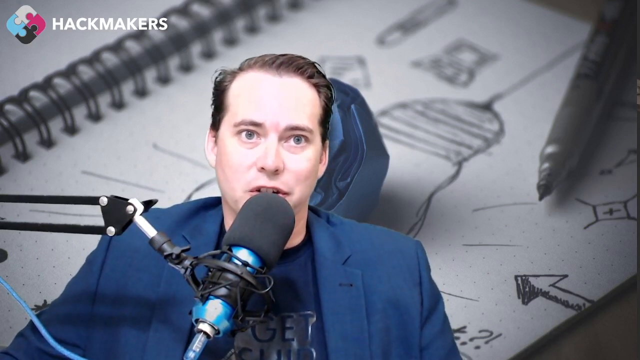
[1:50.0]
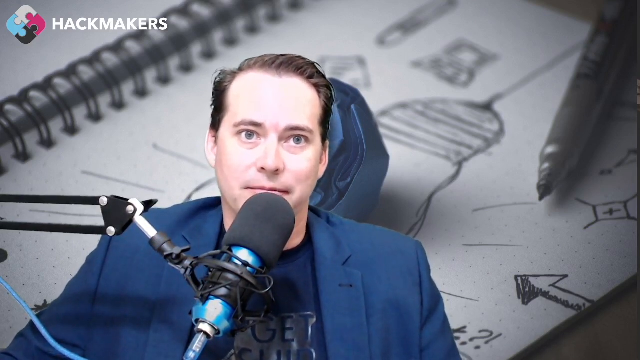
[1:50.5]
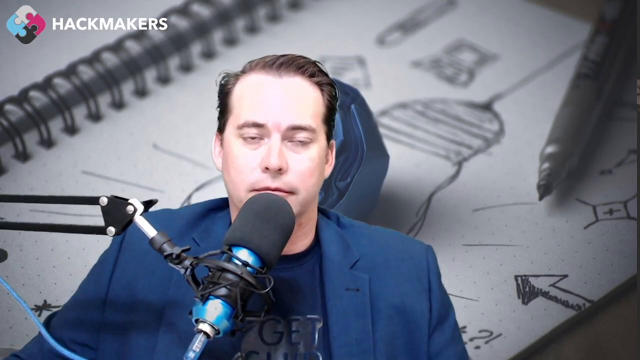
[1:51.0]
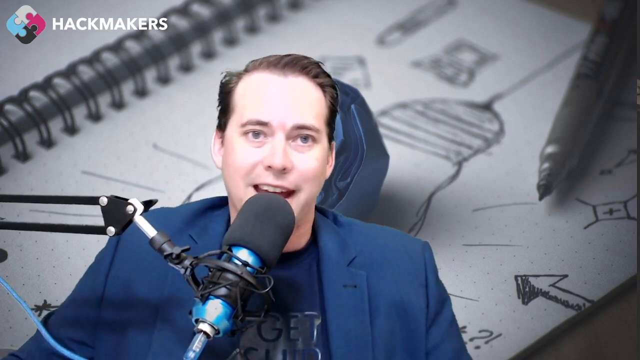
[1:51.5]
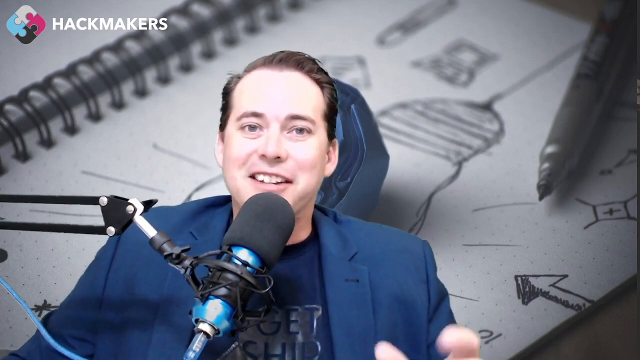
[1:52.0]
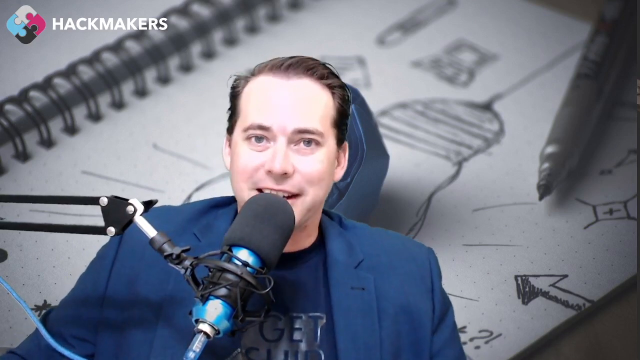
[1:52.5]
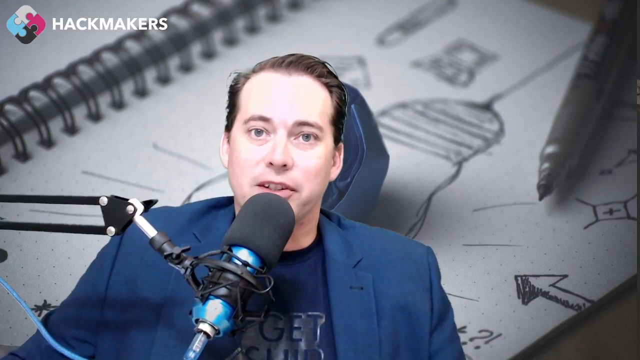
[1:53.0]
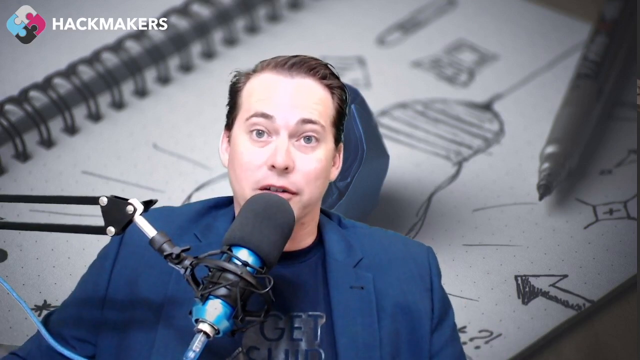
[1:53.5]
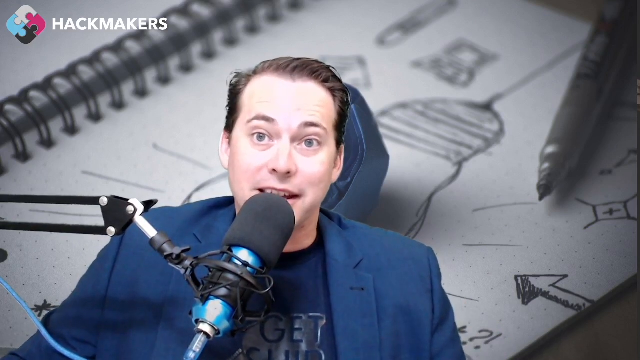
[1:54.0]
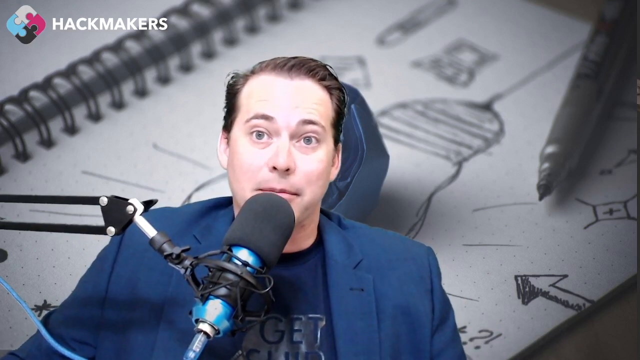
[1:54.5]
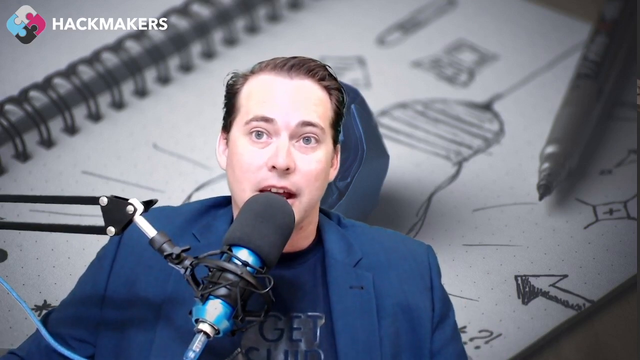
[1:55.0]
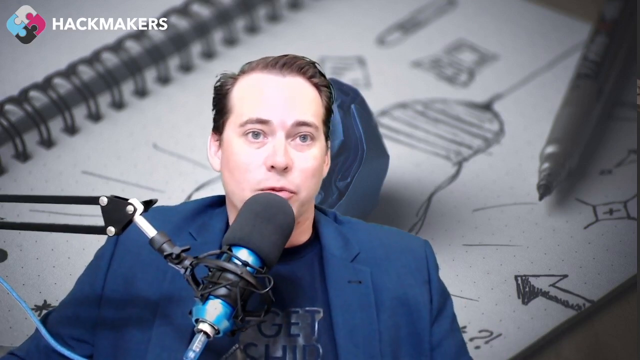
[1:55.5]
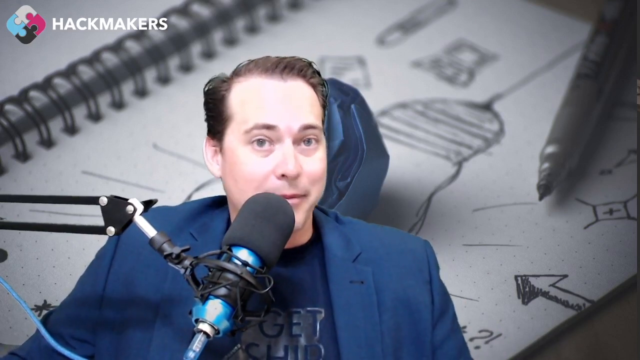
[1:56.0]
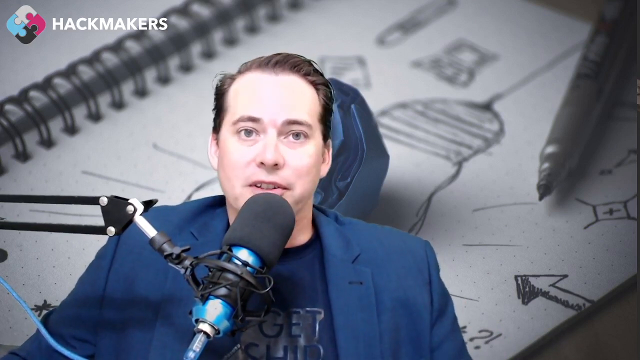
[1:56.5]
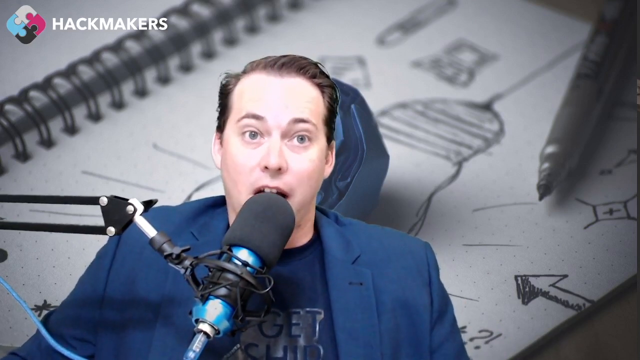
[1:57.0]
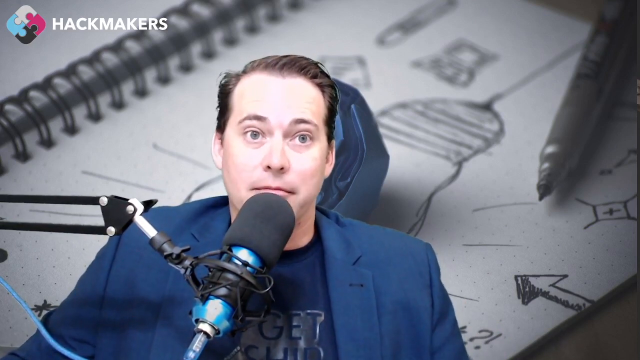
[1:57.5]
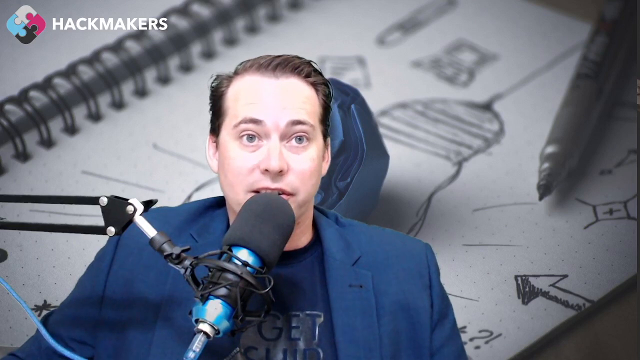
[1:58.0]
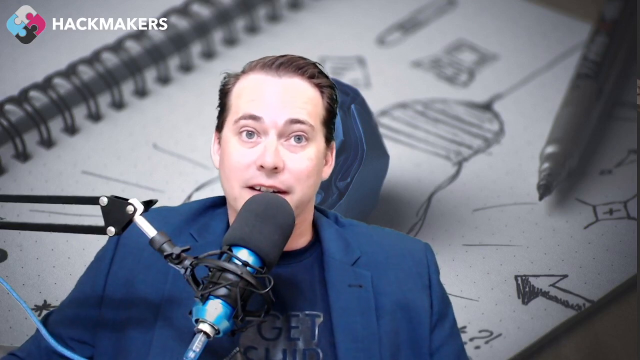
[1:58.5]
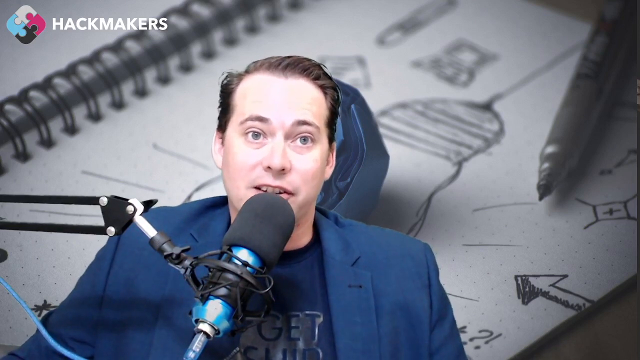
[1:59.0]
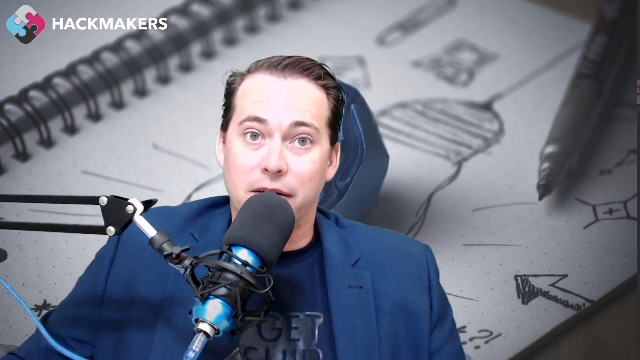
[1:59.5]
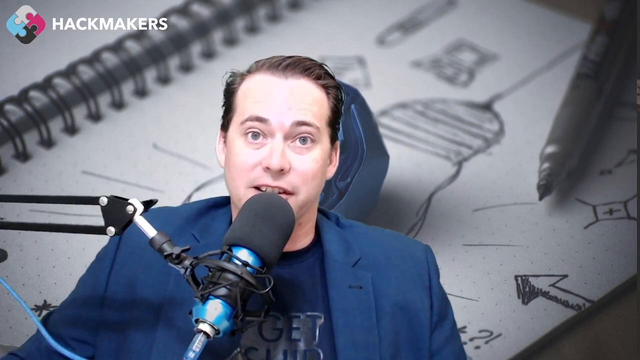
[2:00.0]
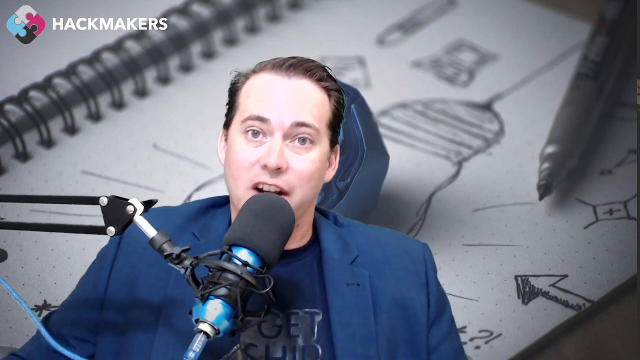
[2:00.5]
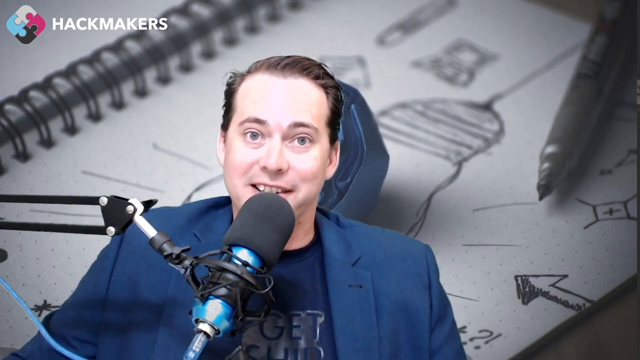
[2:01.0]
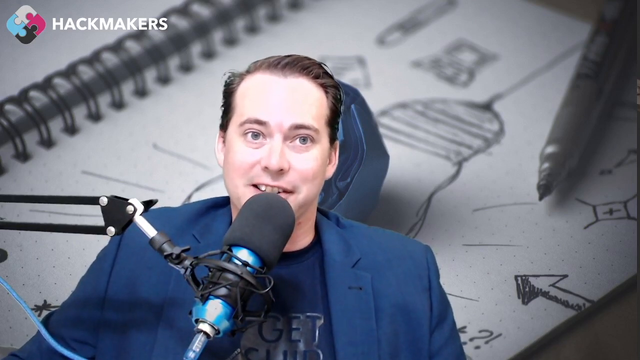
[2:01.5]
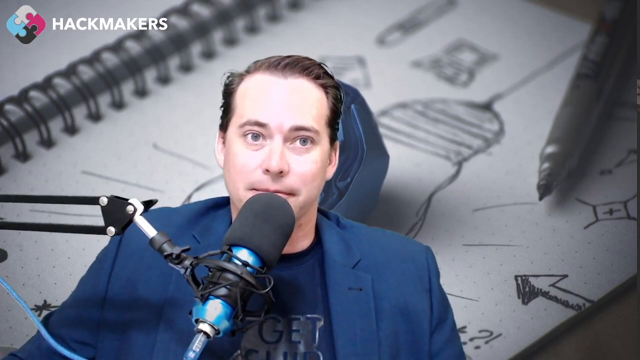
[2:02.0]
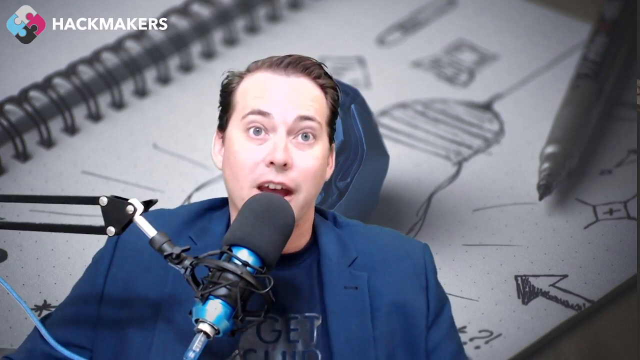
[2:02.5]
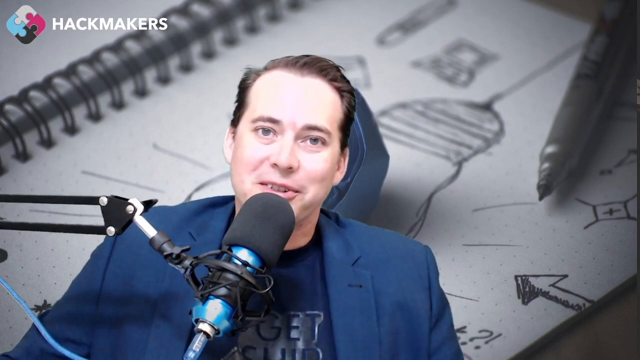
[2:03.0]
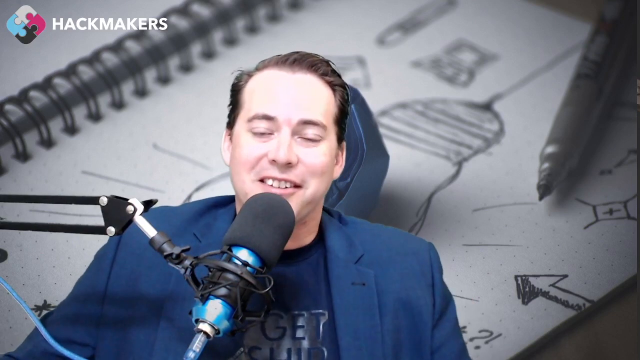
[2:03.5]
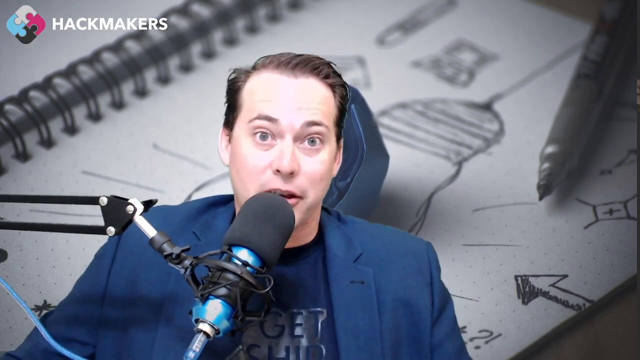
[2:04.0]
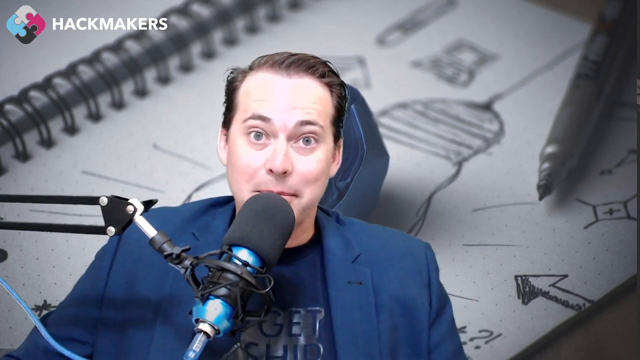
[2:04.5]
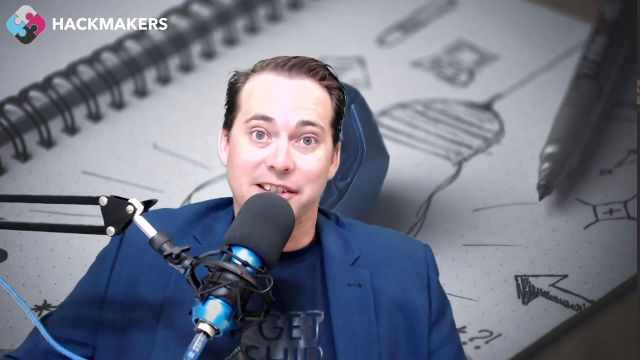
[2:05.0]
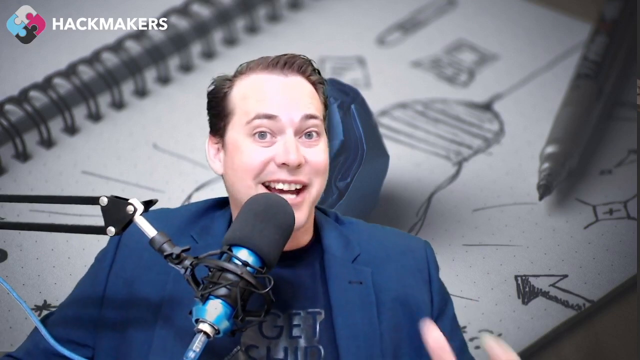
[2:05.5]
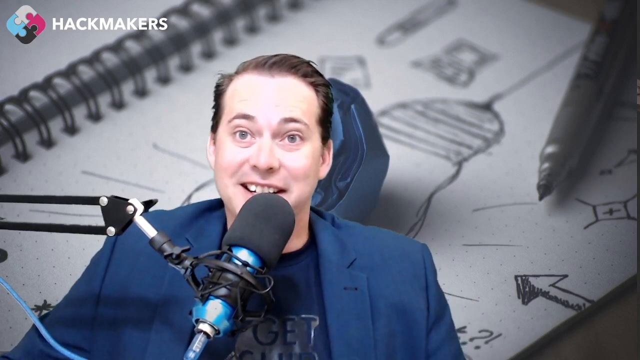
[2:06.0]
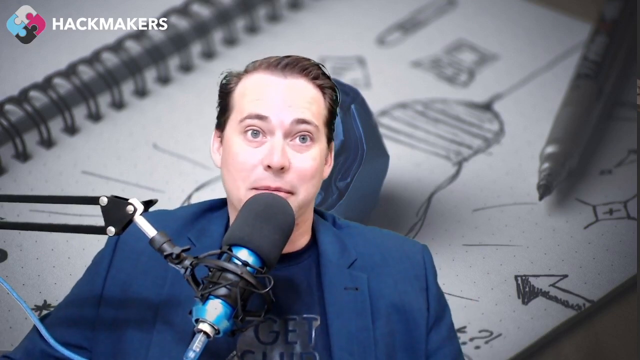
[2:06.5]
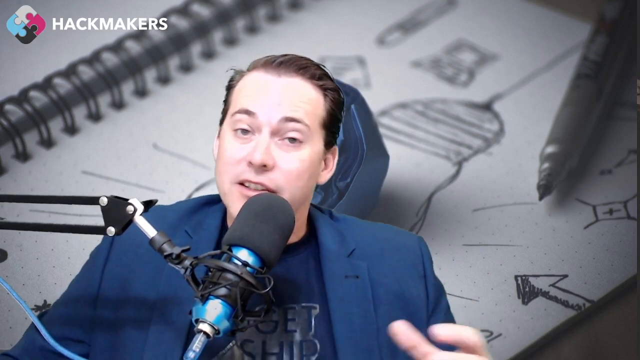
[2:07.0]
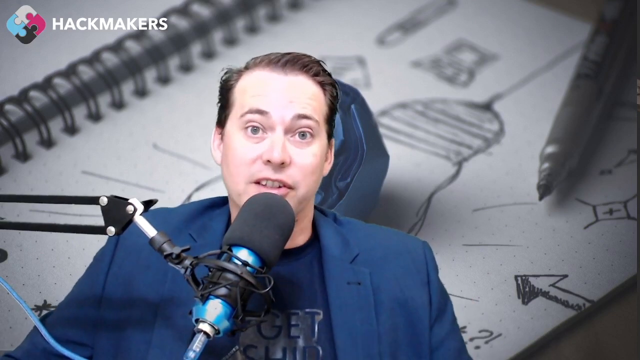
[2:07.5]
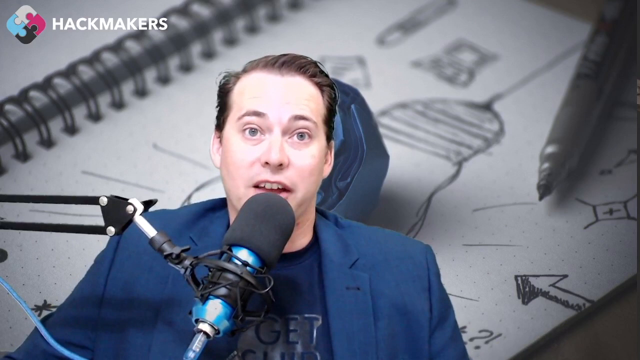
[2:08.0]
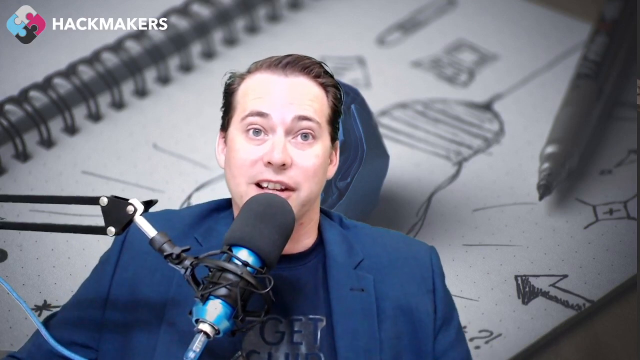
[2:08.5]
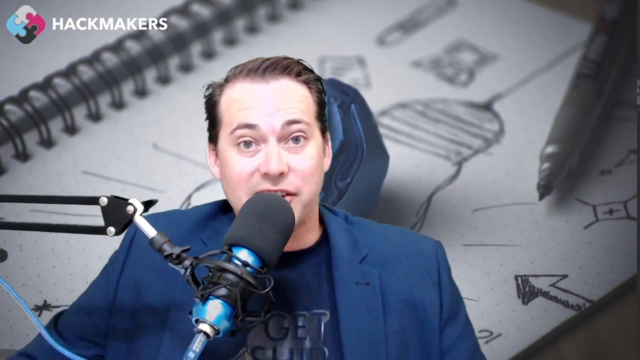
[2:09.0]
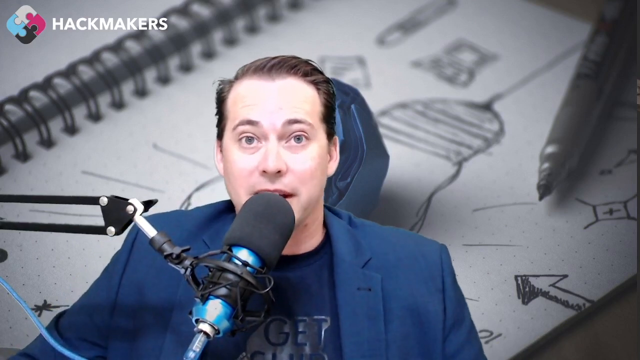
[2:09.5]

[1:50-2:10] The person keeps talking for quite some time, gesturing with his hand and moving his body as he speaks, and slightly smiling here and there. His navy t-shirt has a thick black texture on the chest clearly reading "Get Ship." He has silky brown hair combed to the back, with a line on the right part of his head as a hairstyle. His suit has no patterns.